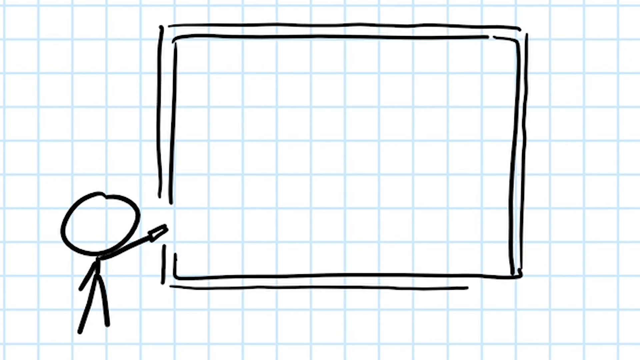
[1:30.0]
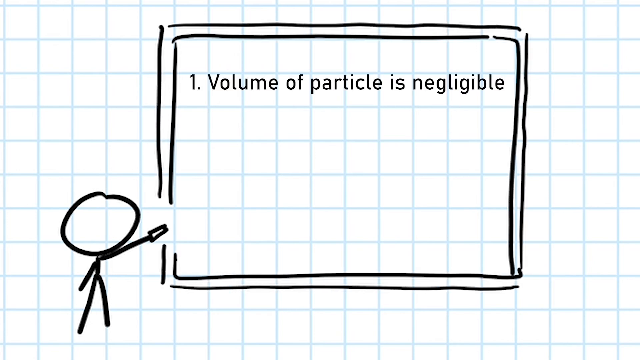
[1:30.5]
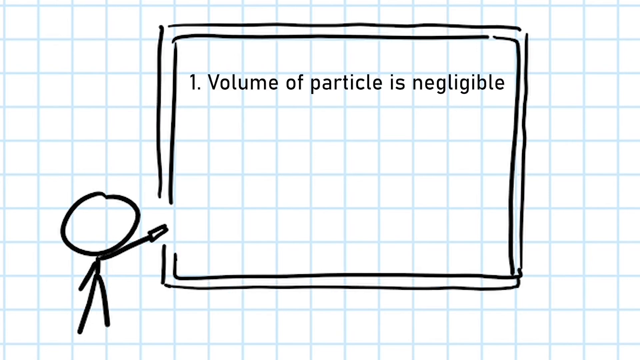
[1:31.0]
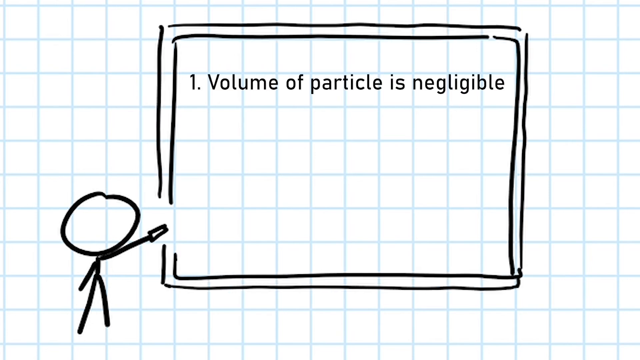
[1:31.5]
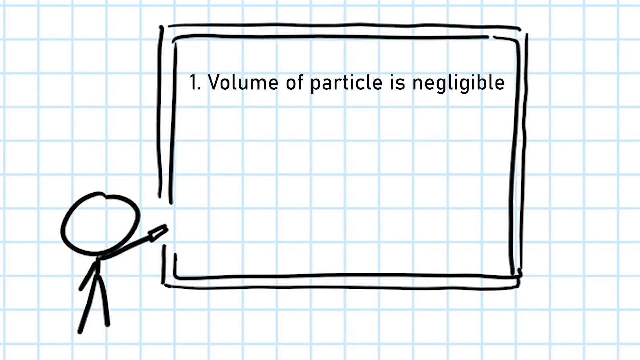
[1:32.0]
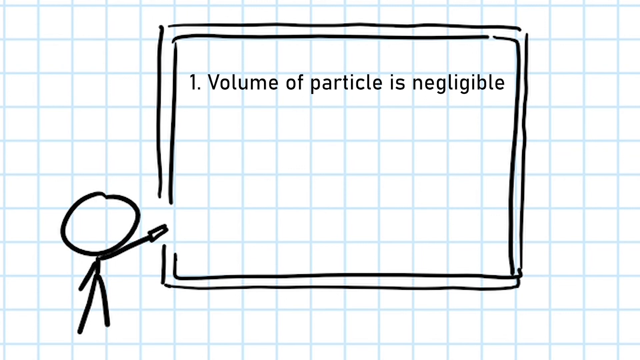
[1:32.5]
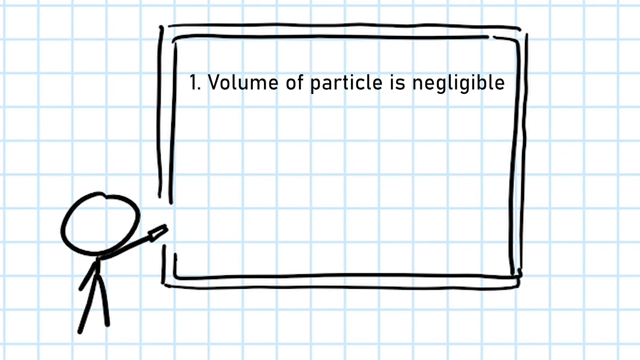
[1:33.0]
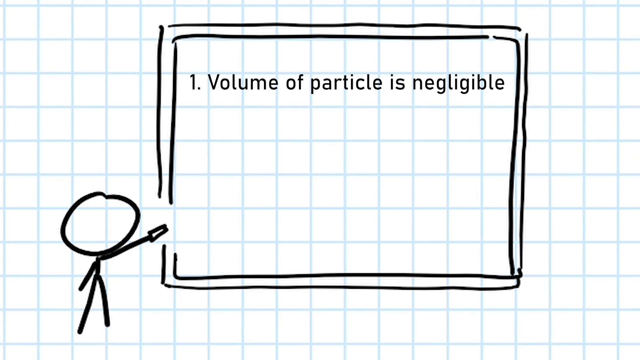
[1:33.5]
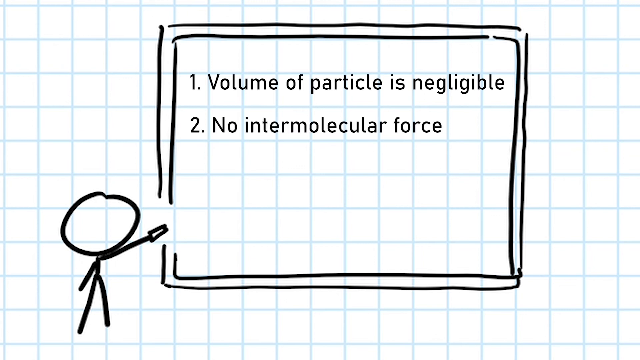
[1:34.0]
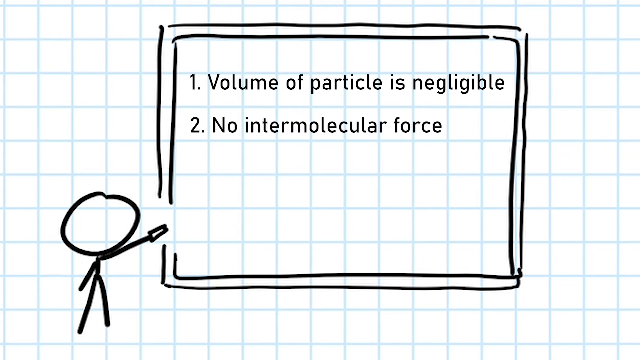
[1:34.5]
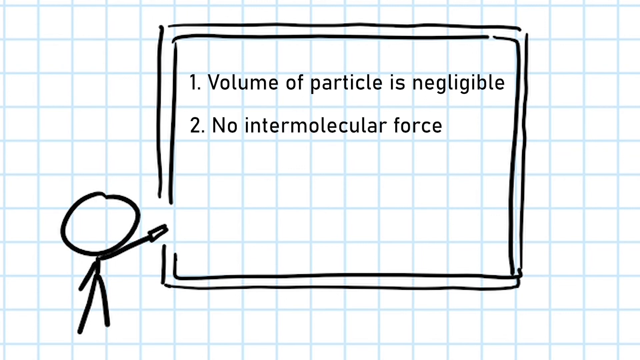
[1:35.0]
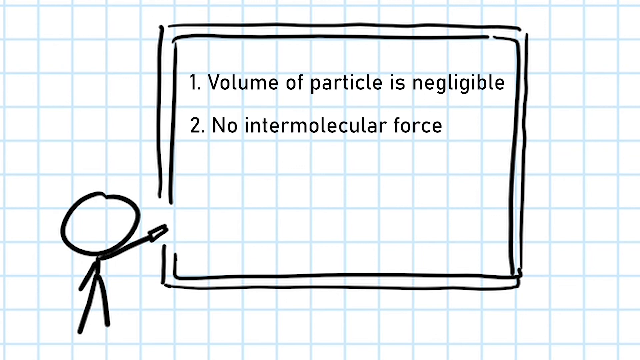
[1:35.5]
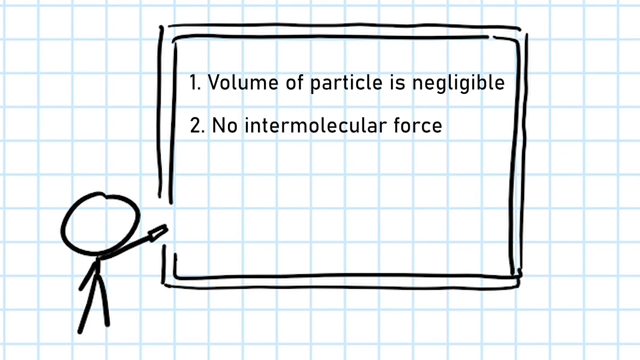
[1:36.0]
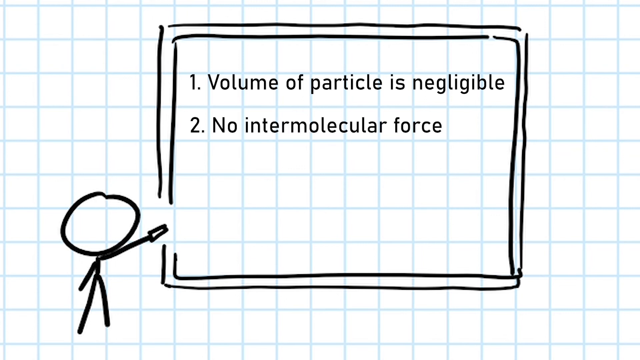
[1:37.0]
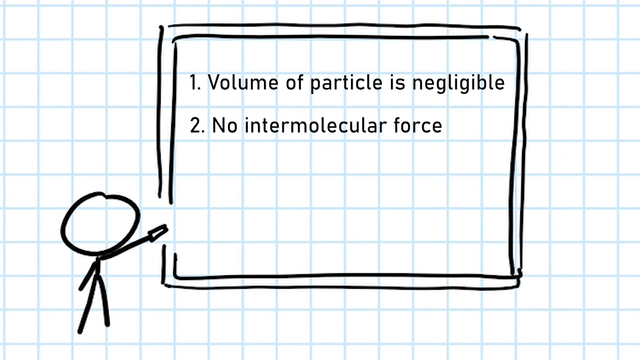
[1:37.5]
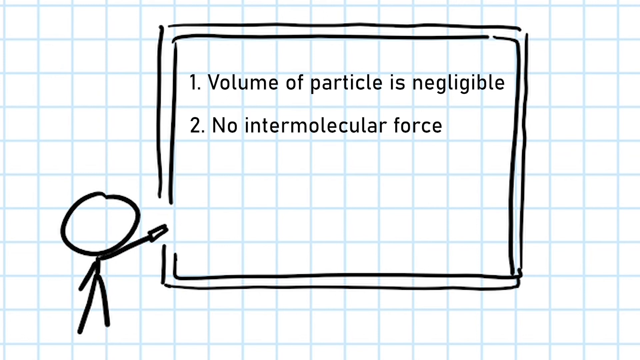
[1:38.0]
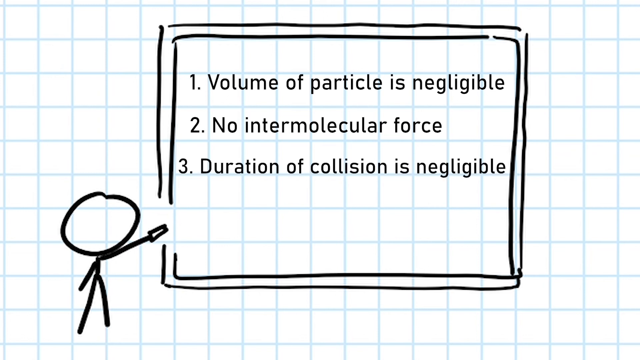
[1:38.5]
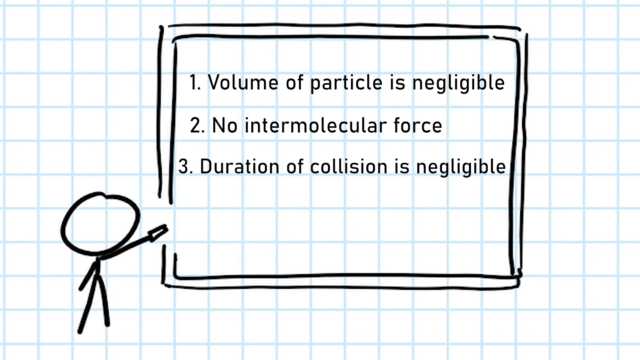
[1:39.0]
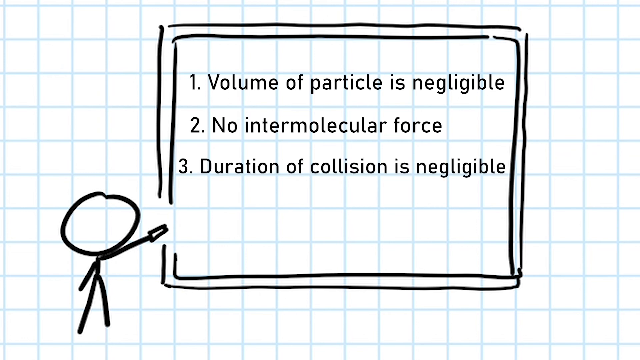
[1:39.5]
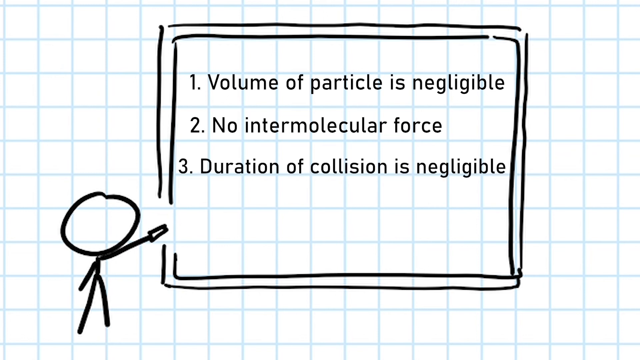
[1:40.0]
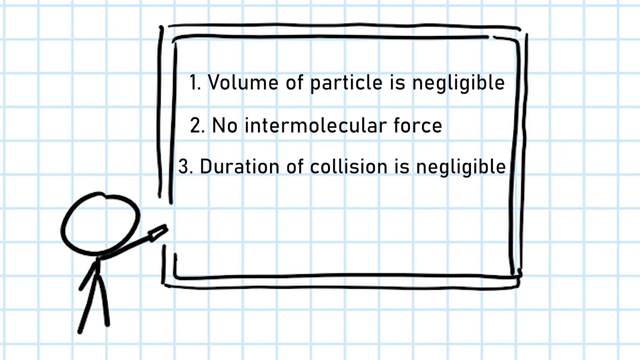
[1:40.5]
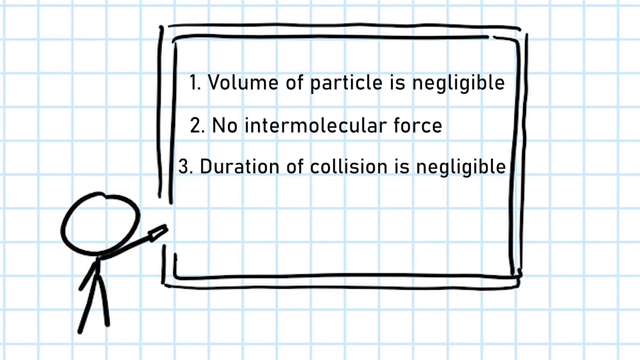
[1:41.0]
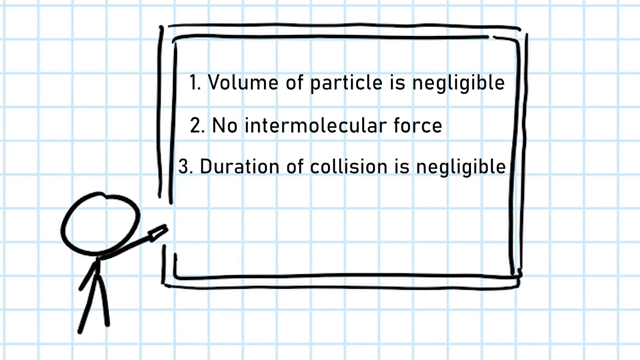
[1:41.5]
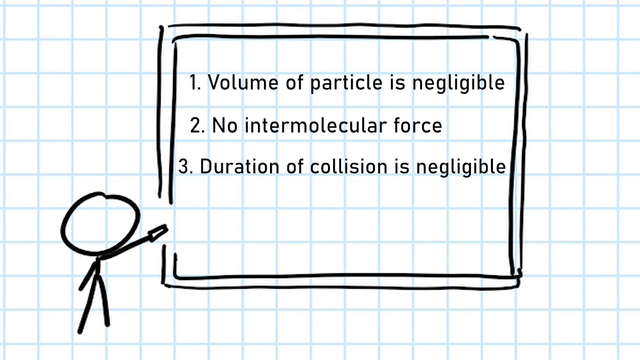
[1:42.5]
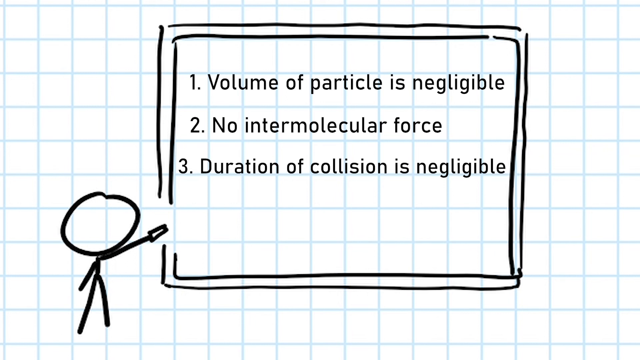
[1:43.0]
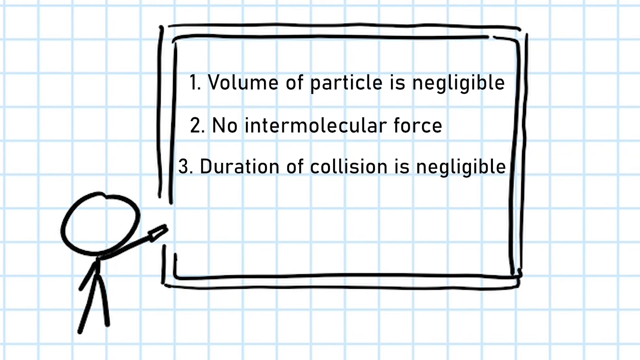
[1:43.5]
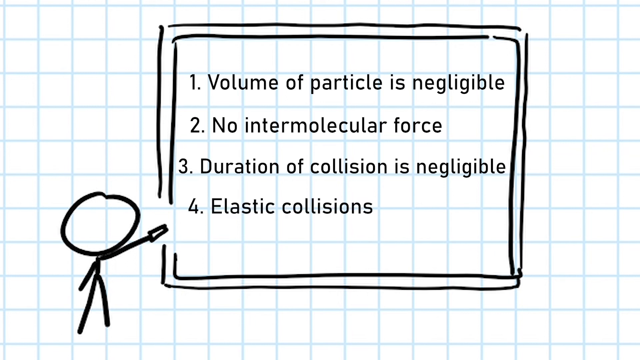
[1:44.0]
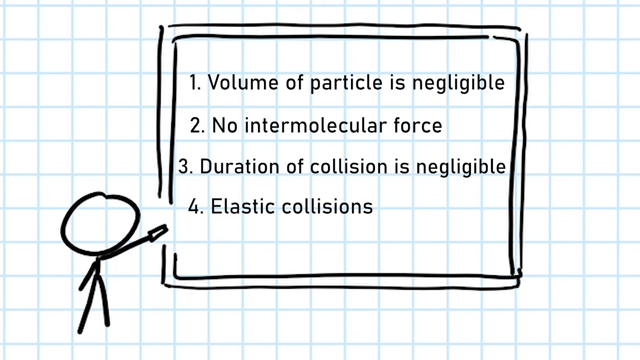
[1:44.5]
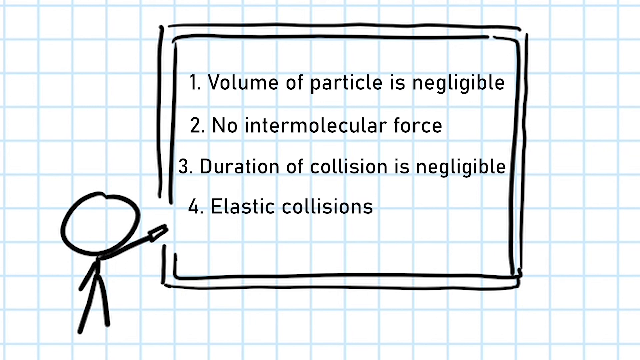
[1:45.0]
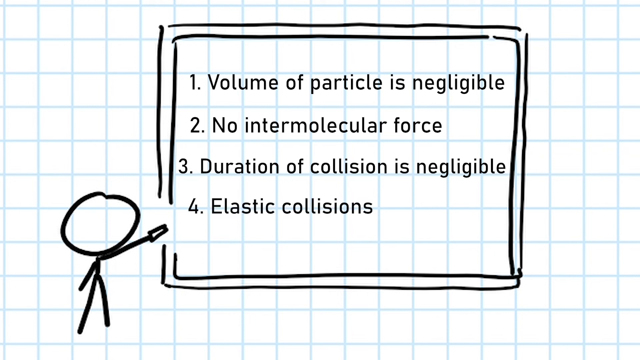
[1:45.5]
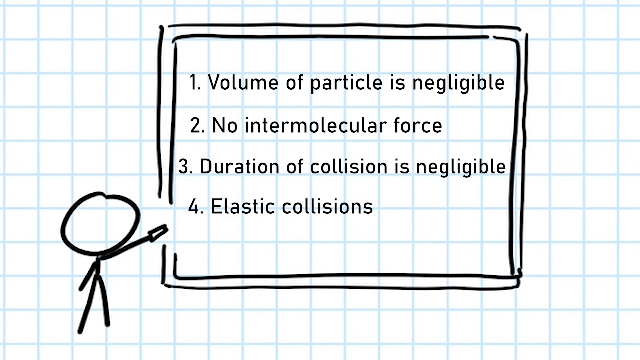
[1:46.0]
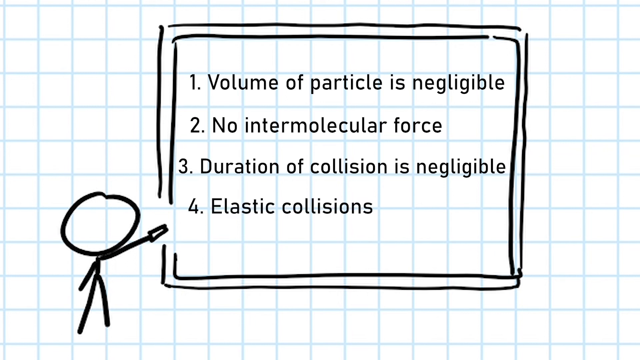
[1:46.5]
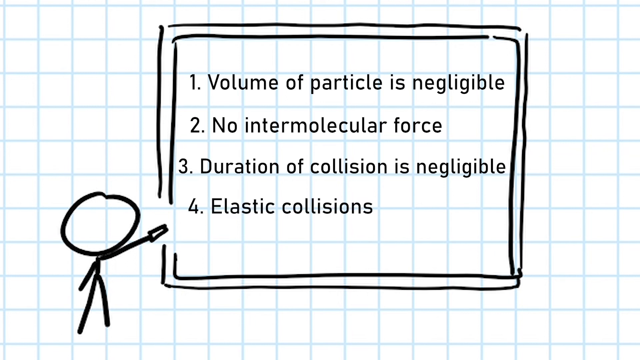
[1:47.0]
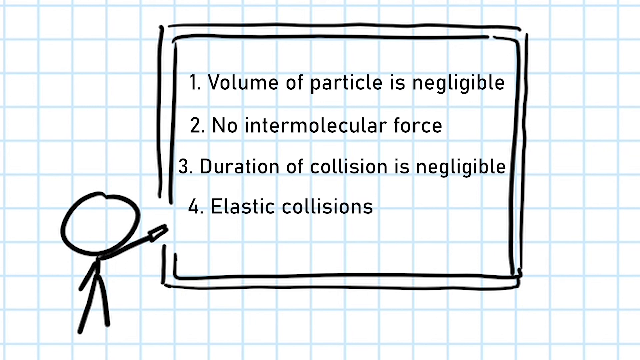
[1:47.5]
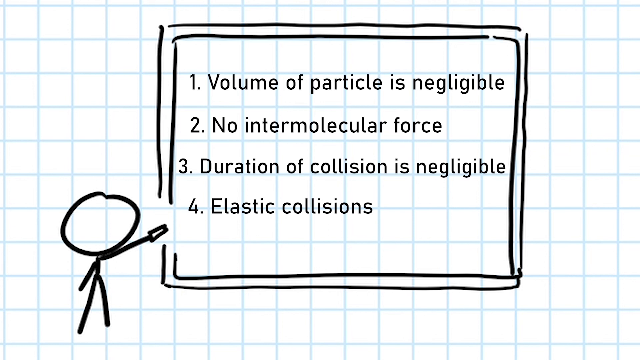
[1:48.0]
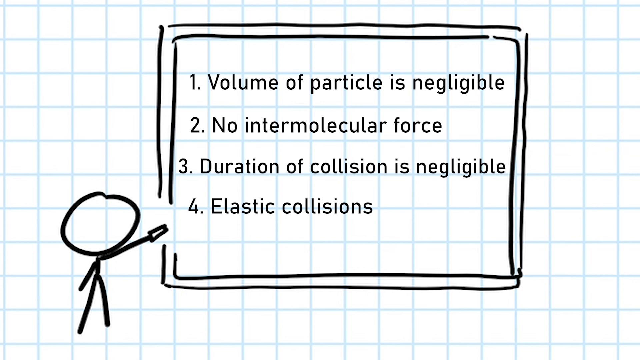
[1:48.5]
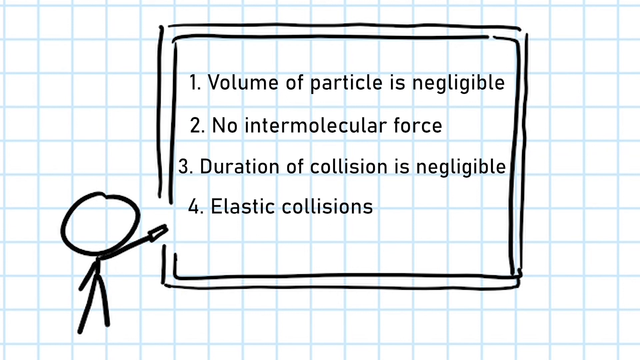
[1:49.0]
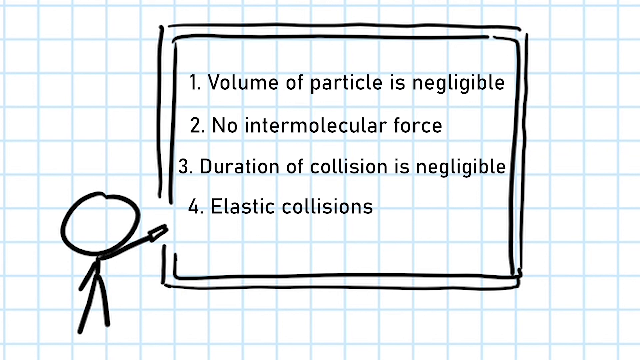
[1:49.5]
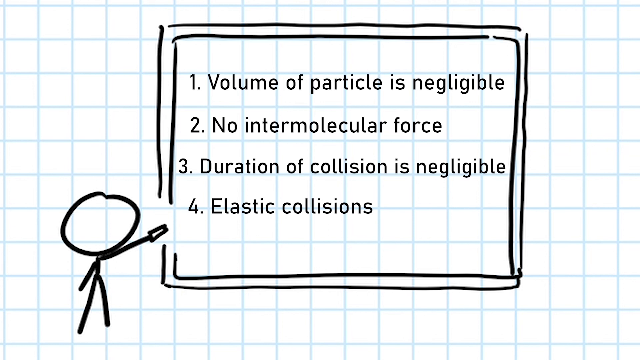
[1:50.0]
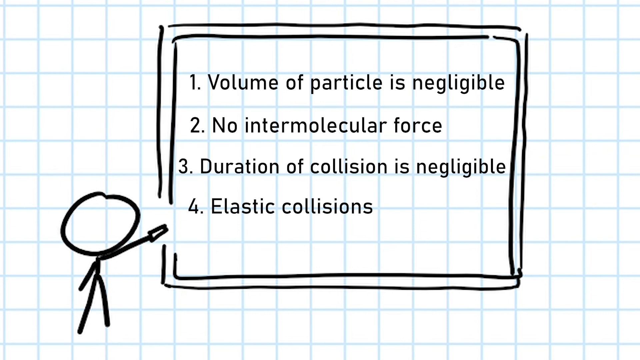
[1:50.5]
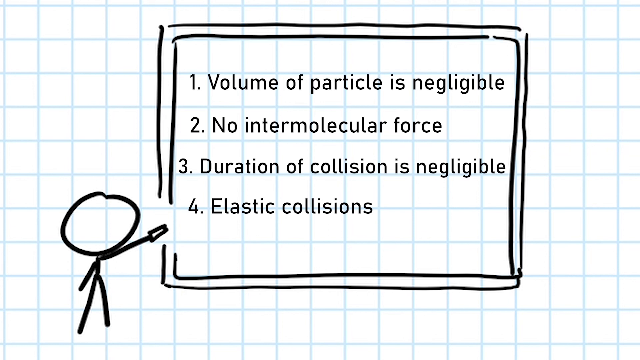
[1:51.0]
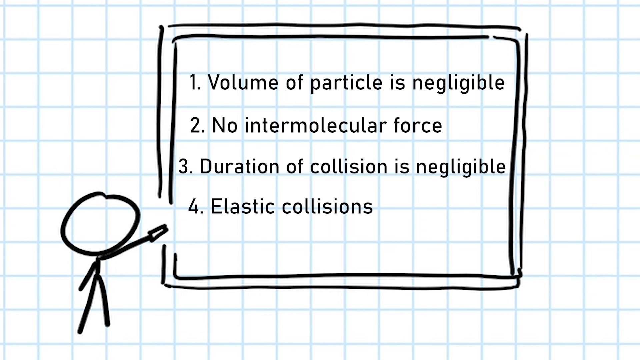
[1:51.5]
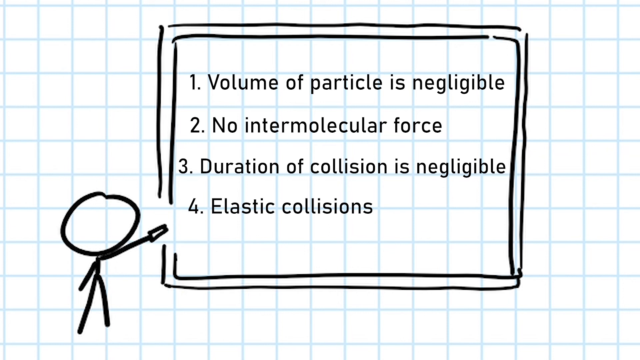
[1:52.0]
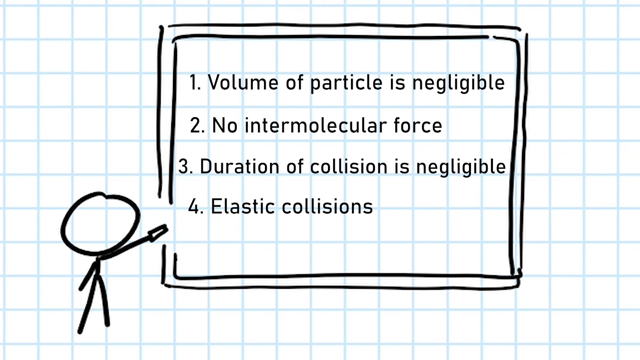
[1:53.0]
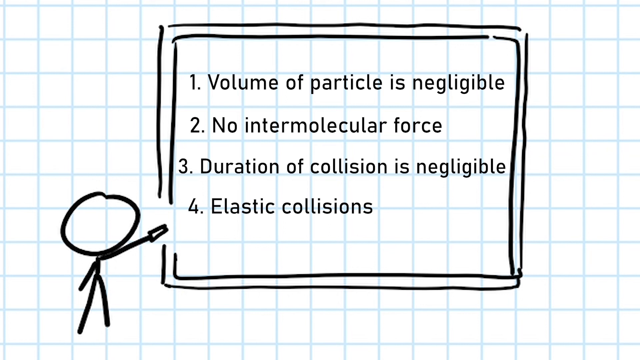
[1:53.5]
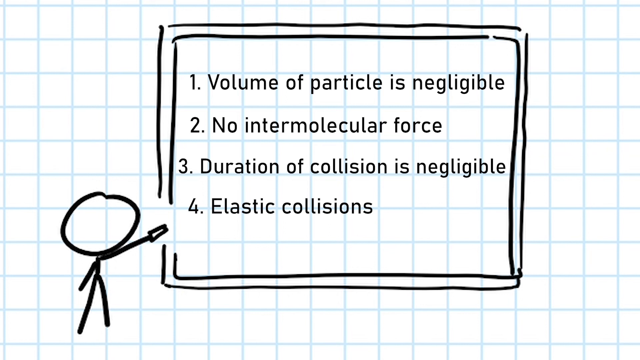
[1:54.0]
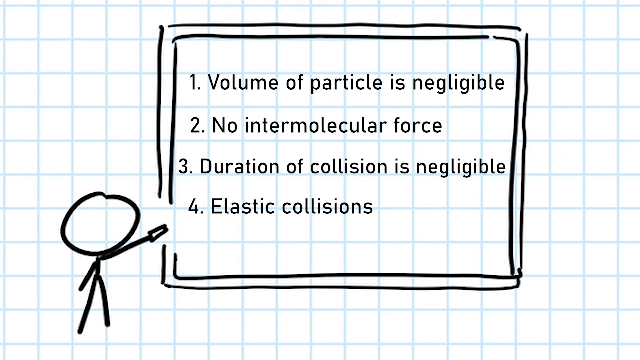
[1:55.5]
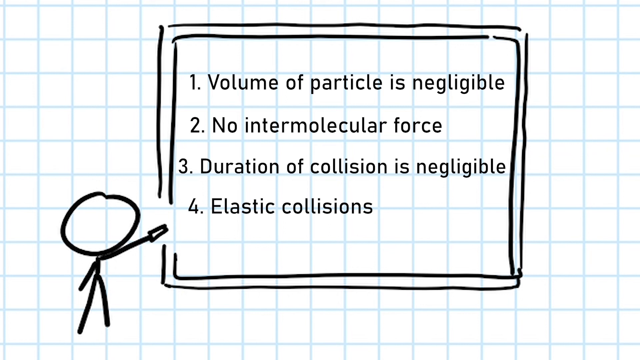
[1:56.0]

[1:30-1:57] The stick man points out the different assumptions, holding up his chalk without actually writing, as a final review. All four are listed together on the white board: number one at the top, "volume of particle is negligible"; two, "no intermolecular force"; three, "duration of collision is negligible"; and four, "elastic conditions". He apparently goes over each one quickly, and the video ends kind of abruptly with no end screen or credits.